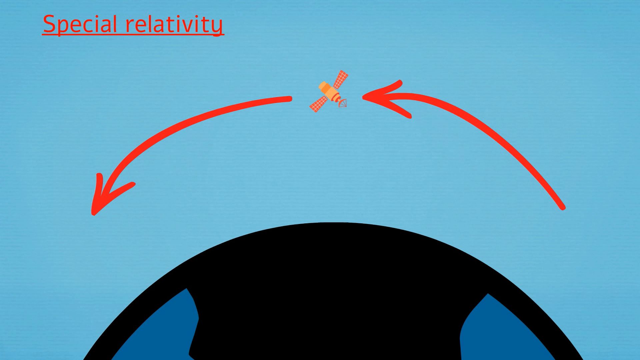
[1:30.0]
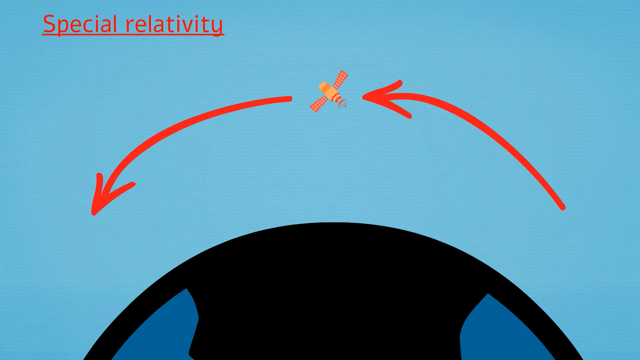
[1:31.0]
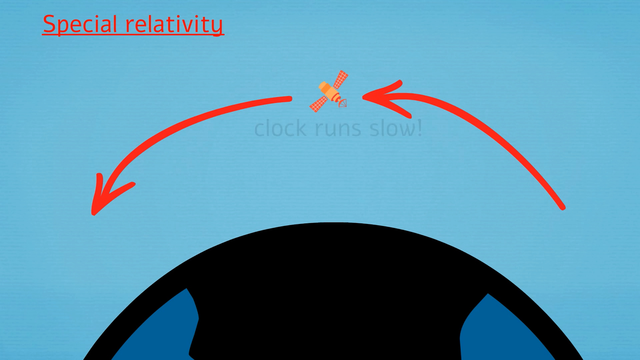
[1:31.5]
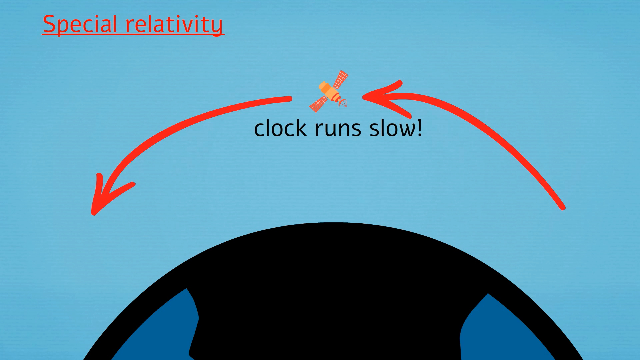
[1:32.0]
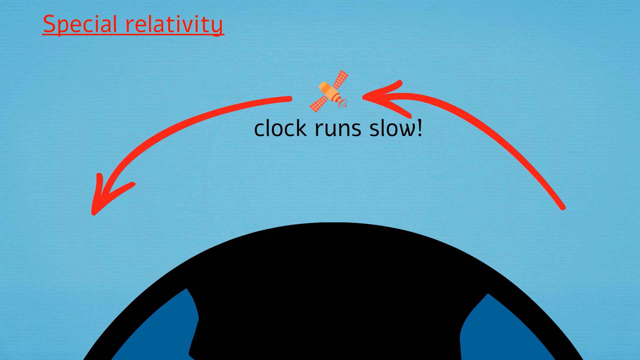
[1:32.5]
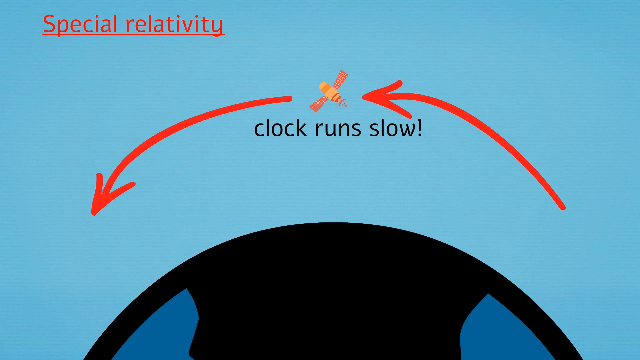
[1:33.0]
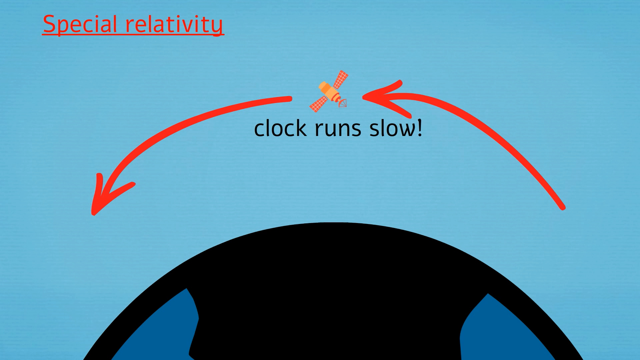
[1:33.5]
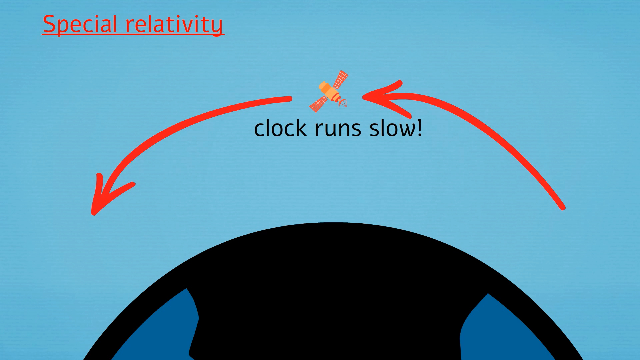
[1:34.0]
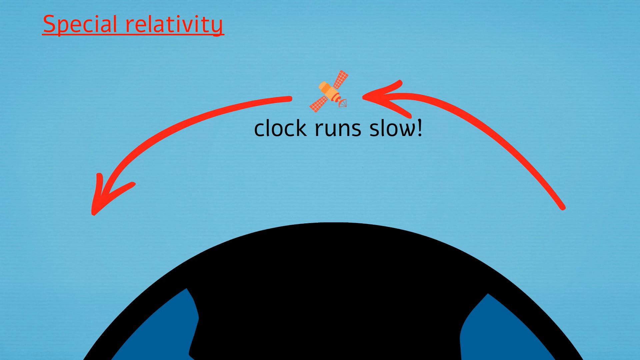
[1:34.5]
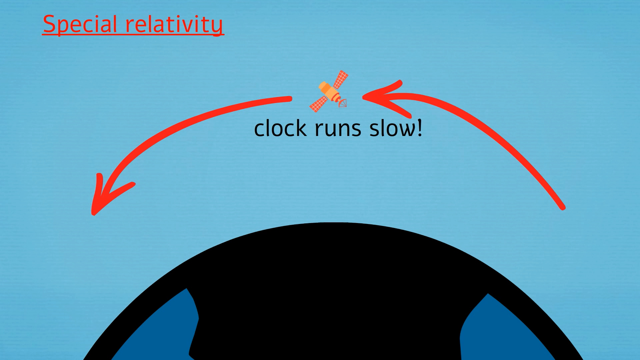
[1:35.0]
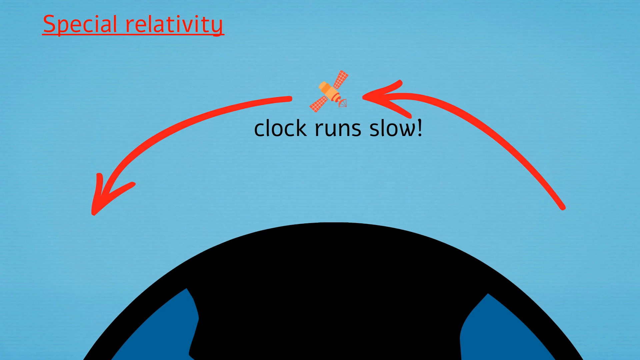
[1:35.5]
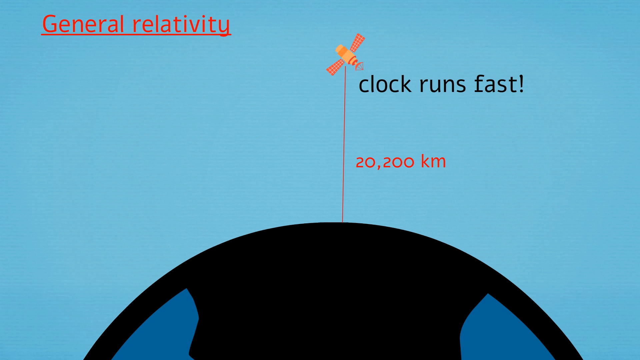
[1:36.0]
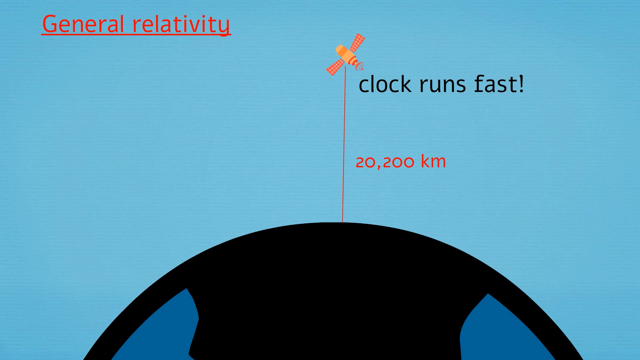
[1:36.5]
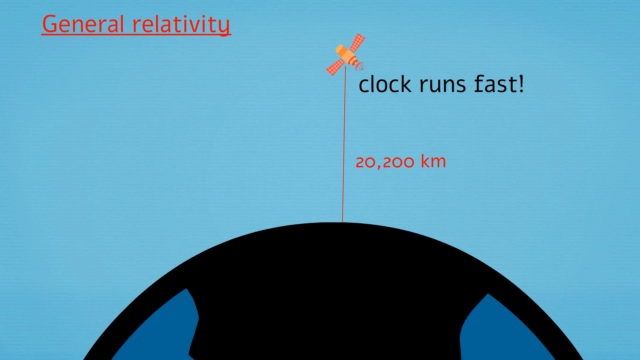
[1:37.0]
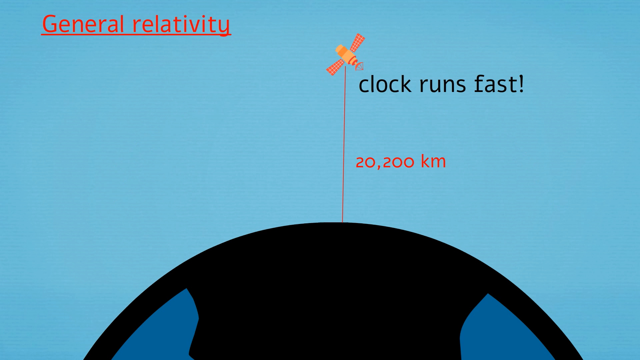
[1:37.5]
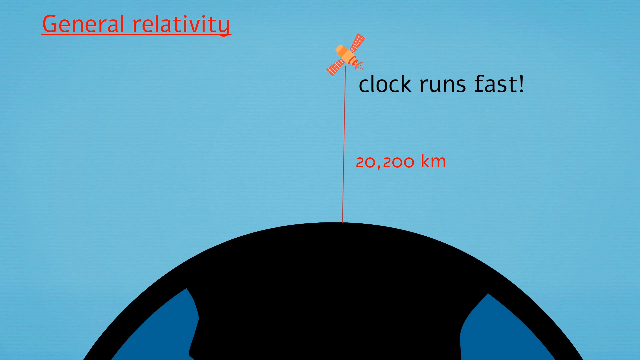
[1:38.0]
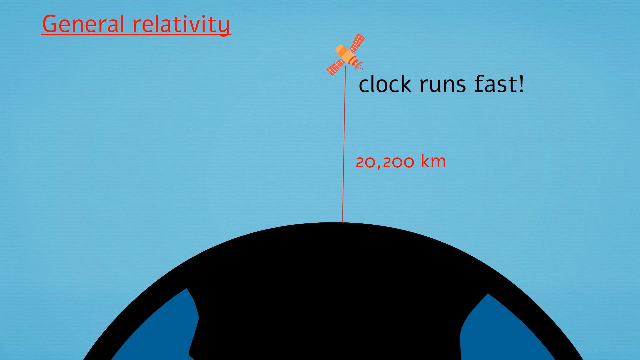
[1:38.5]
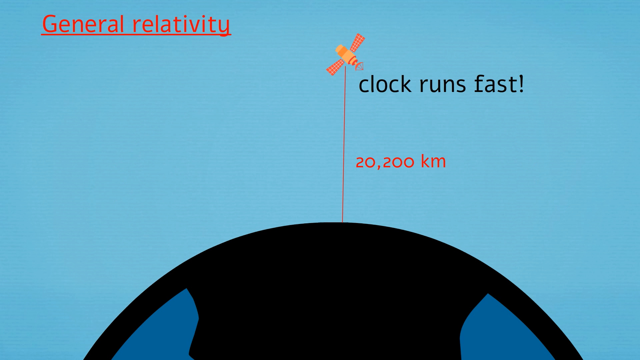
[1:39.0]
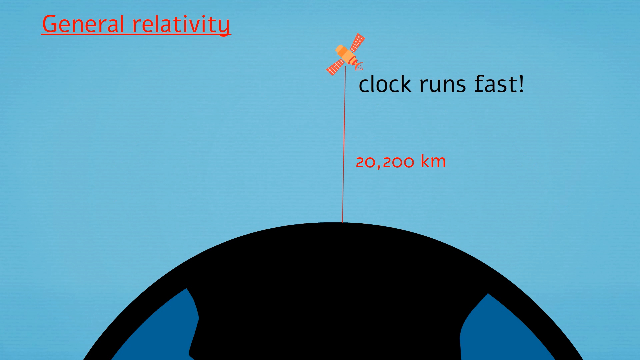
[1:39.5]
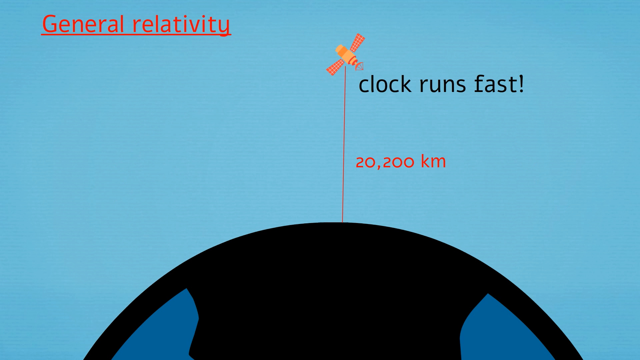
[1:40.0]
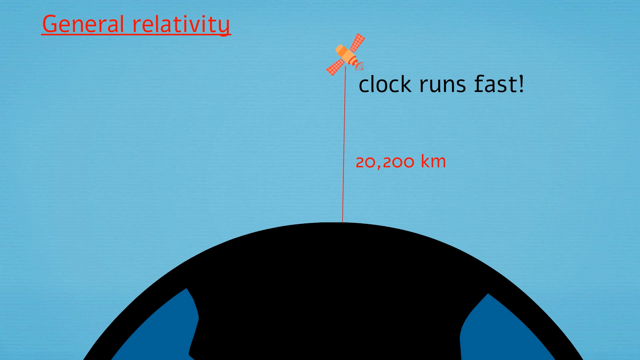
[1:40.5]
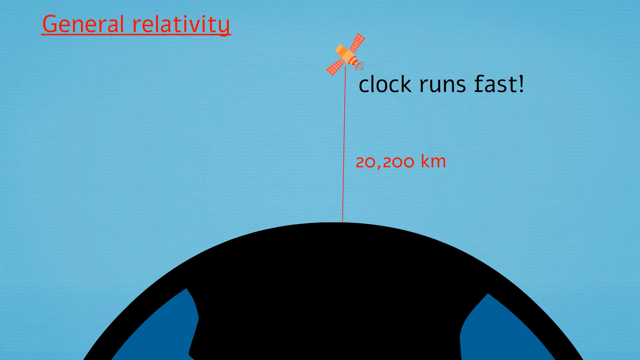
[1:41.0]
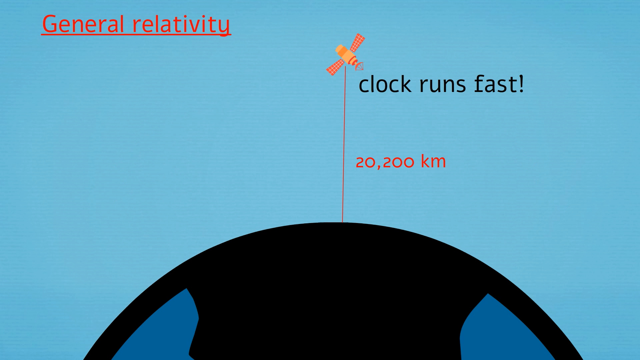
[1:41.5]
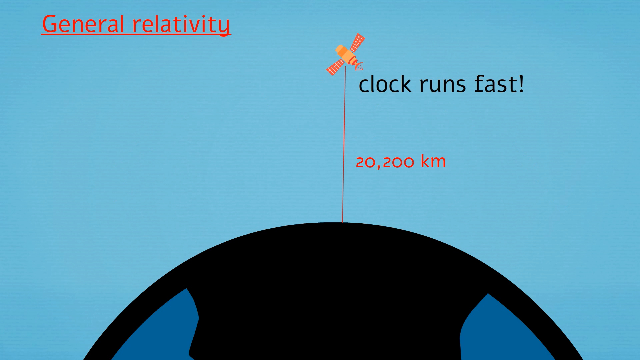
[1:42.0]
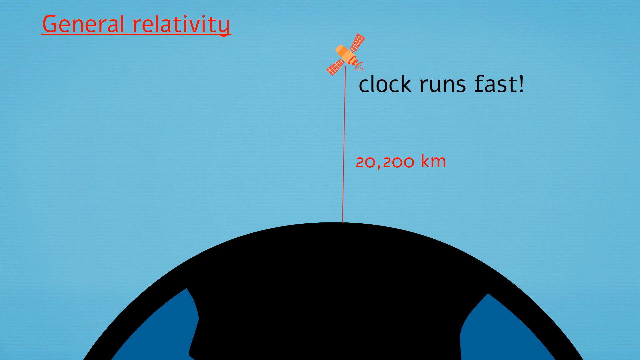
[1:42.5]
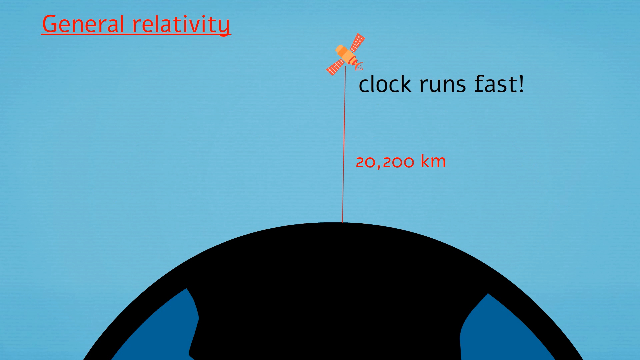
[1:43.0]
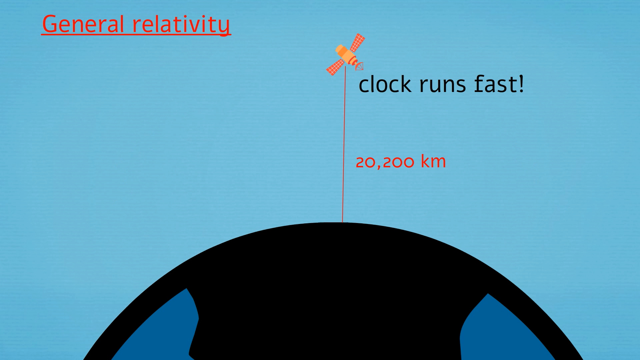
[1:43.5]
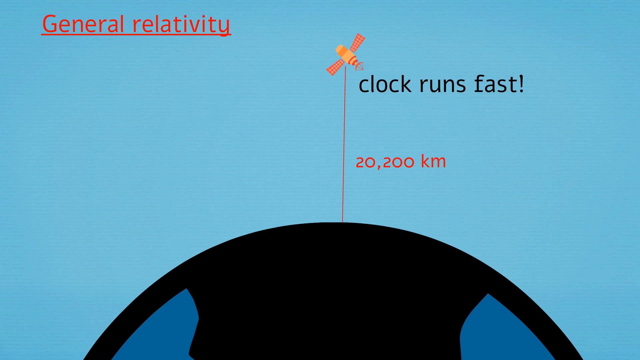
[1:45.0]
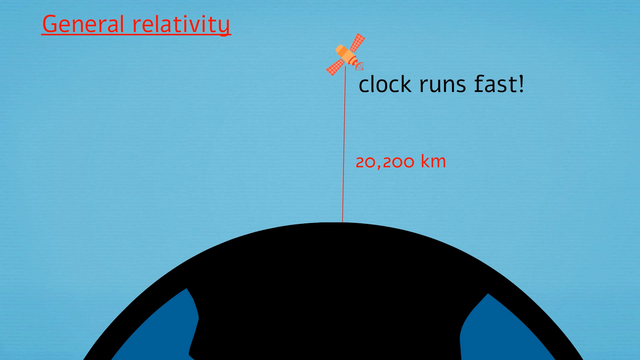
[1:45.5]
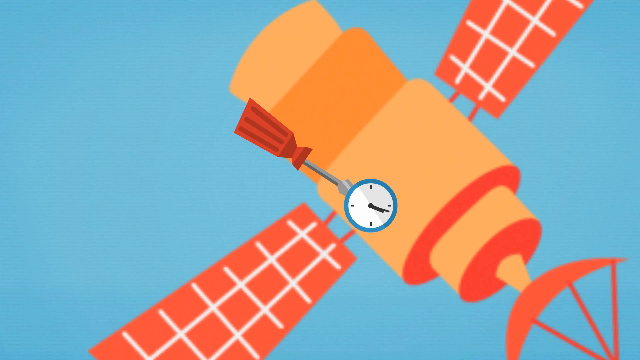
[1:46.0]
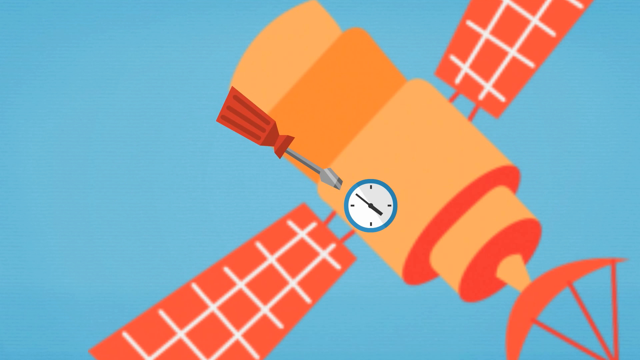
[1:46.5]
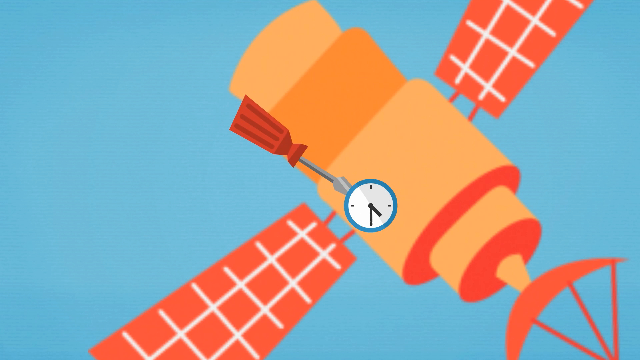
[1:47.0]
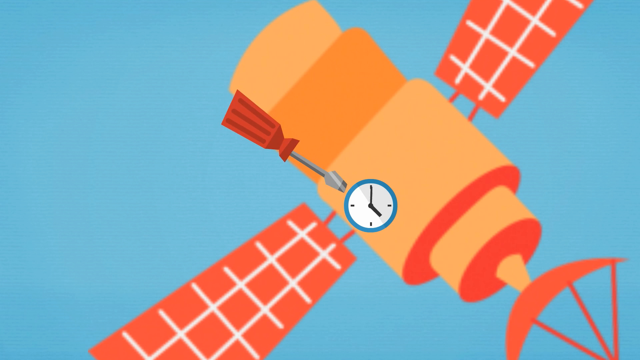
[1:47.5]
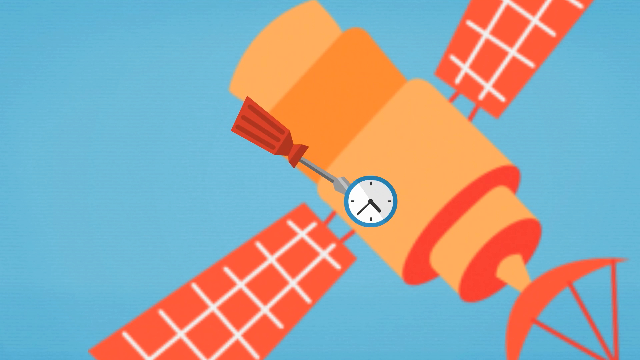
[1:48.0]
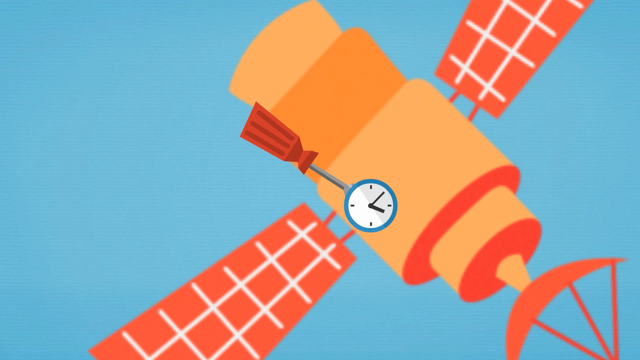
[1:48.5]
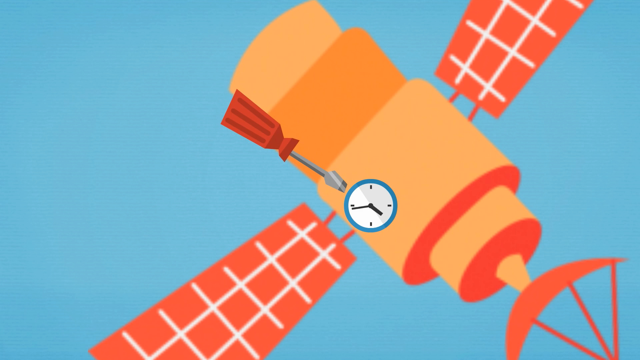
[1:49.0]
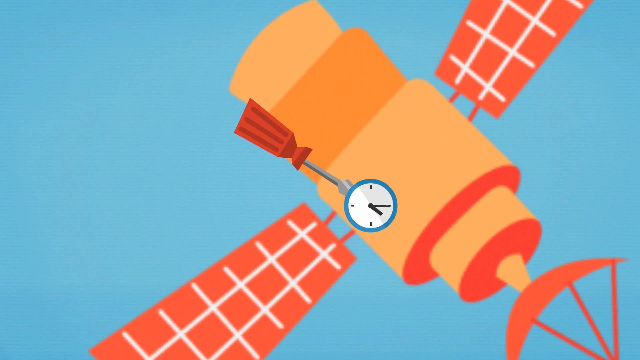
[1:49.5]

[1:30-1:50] The black planet is on the bottom half of the screen, and the orange satellite that looks like a bee is in the middle. Red arrows point to the satellite, one on its right and one on its left, both going from right to left, seemingly showing it starting to go around the planet. The animation then changes to the satellite with a line from the satellite to the planet; under the satellite is black text that says "clock runs fast", and under that, in red, is the distance from the satellite to the Earth in kilometers. After a few seconds, the animation zooms in on the orange satellite, where an animated screwdriver works on a clock on the satellite. The clock is white with a blue border, and its animated arms run around the clock face.